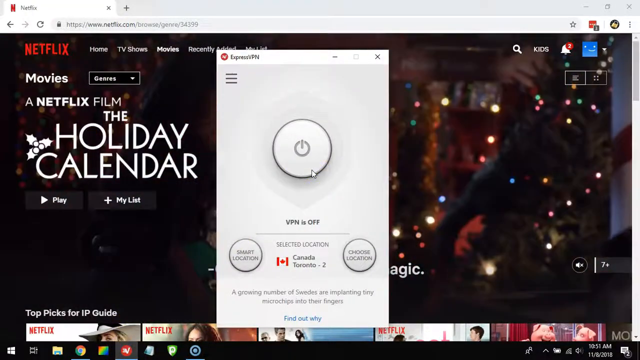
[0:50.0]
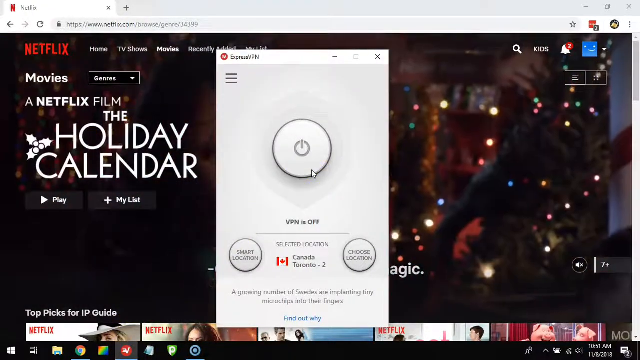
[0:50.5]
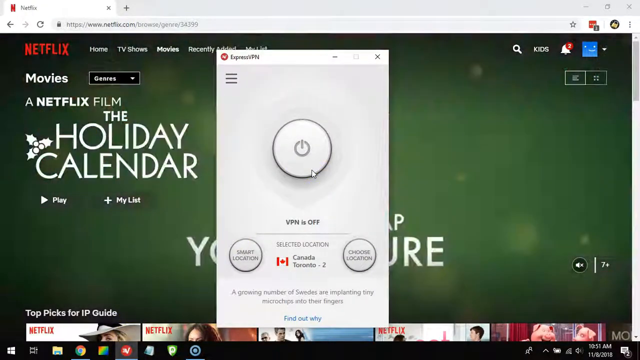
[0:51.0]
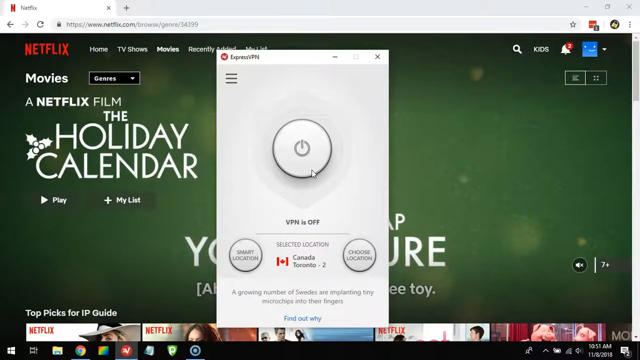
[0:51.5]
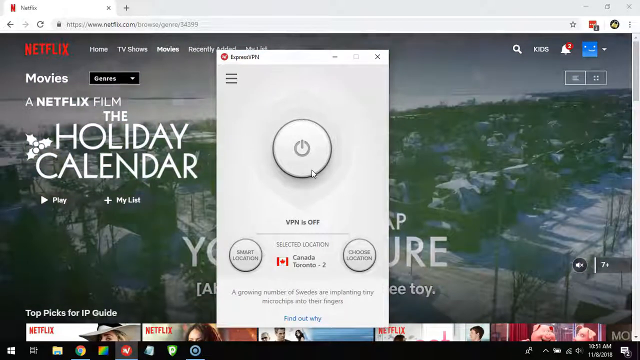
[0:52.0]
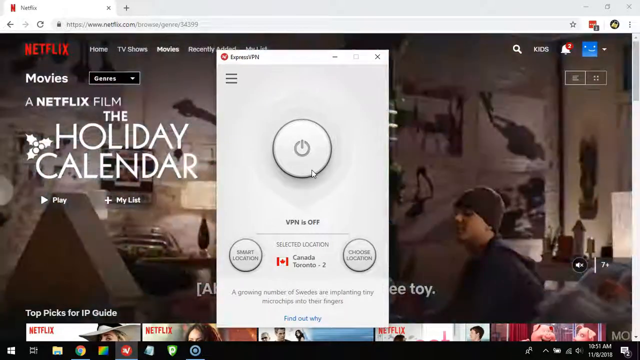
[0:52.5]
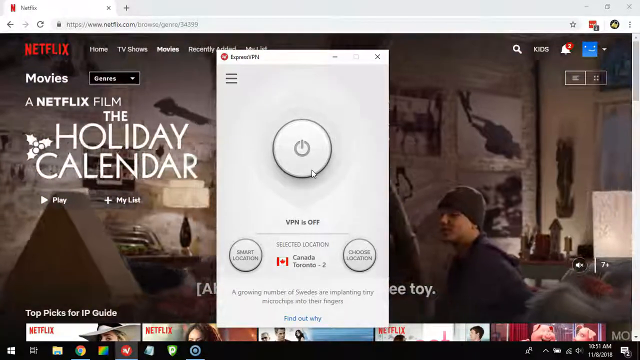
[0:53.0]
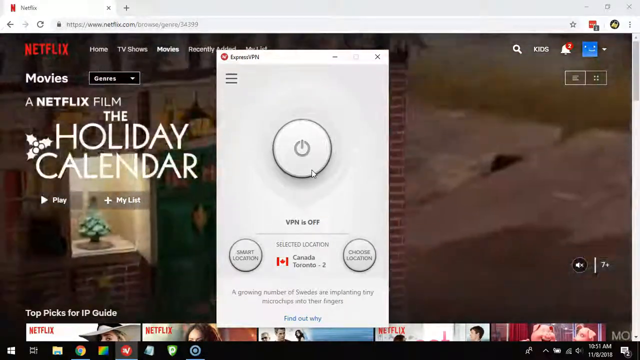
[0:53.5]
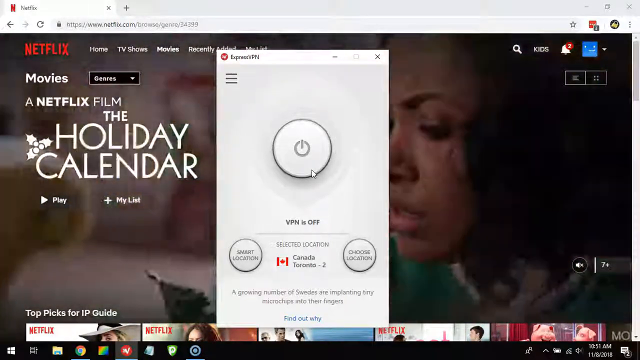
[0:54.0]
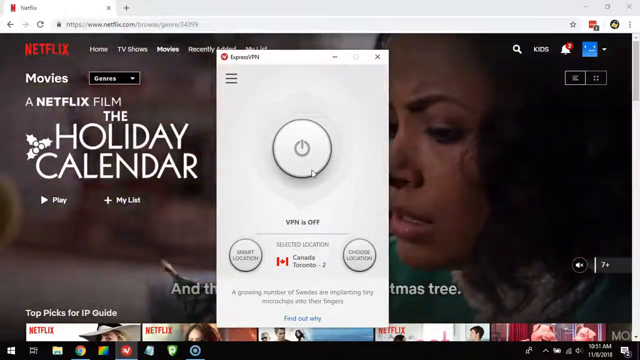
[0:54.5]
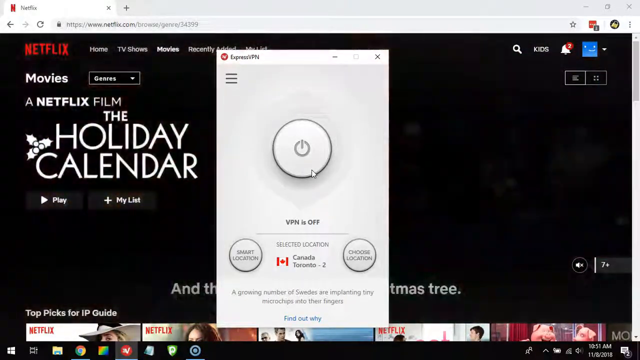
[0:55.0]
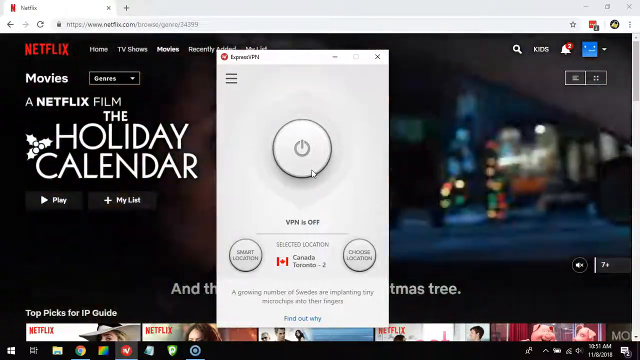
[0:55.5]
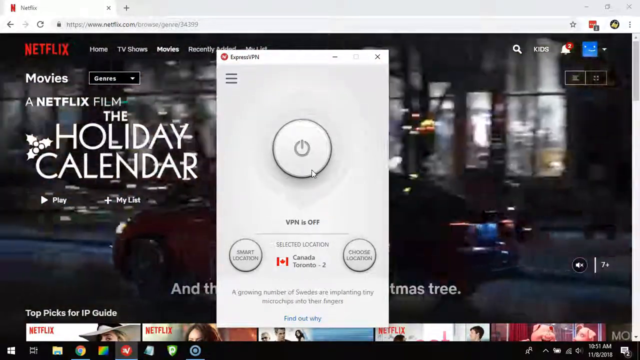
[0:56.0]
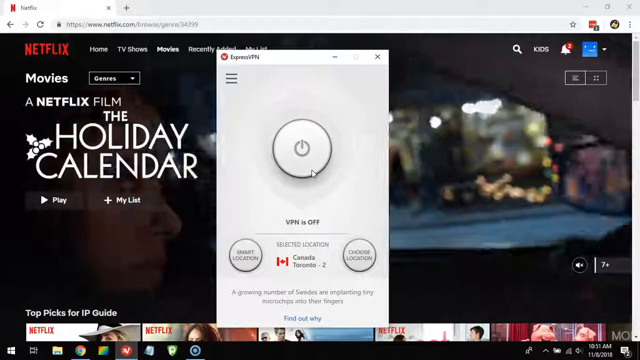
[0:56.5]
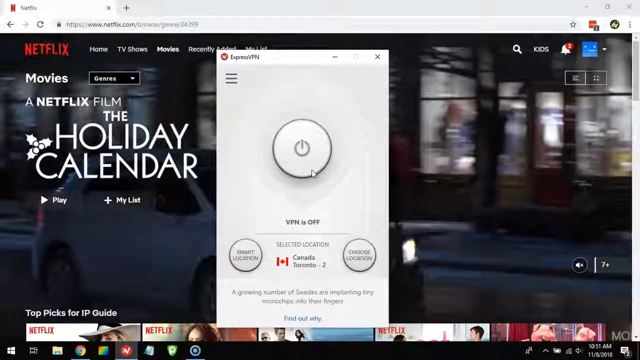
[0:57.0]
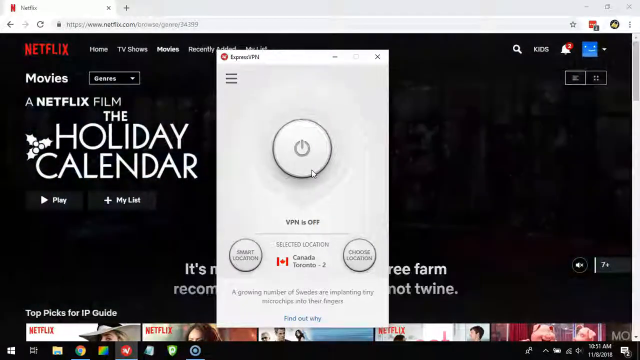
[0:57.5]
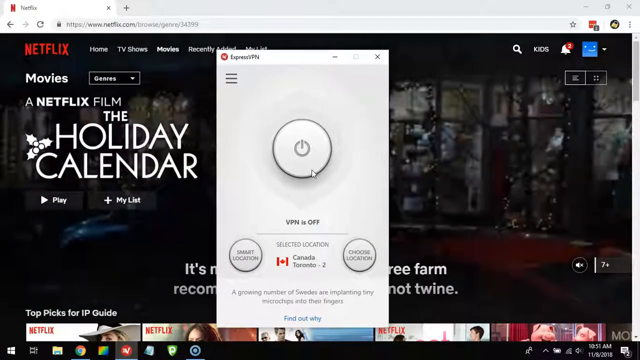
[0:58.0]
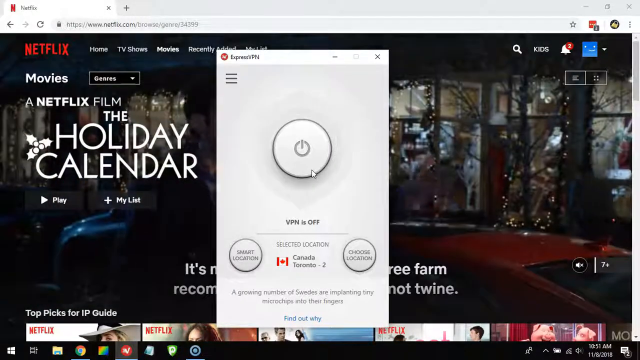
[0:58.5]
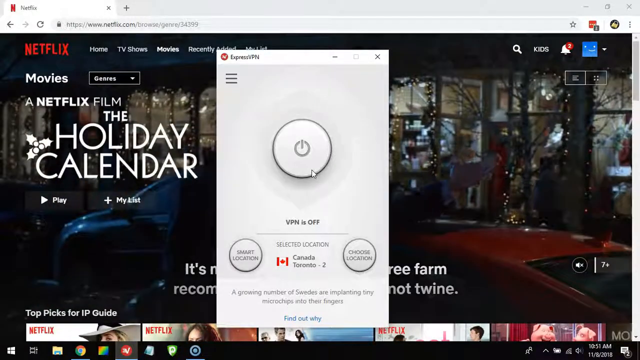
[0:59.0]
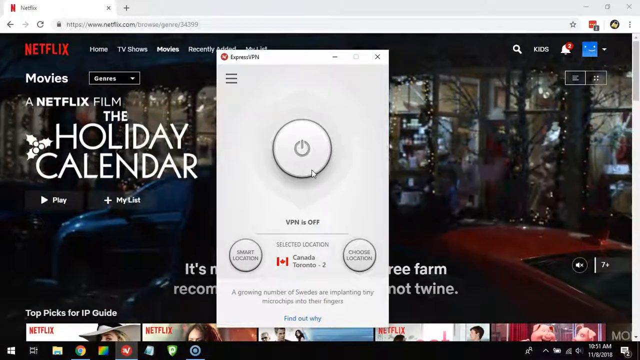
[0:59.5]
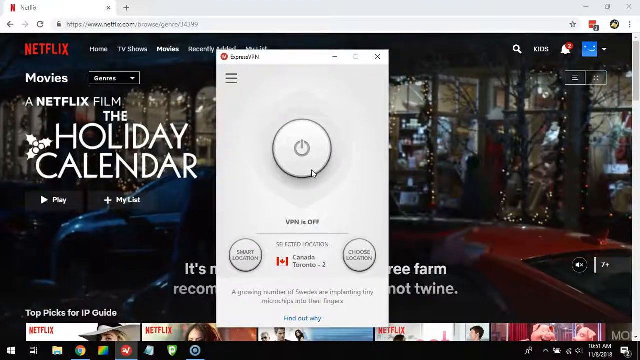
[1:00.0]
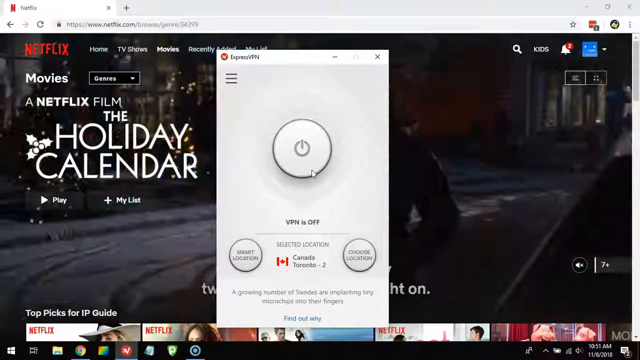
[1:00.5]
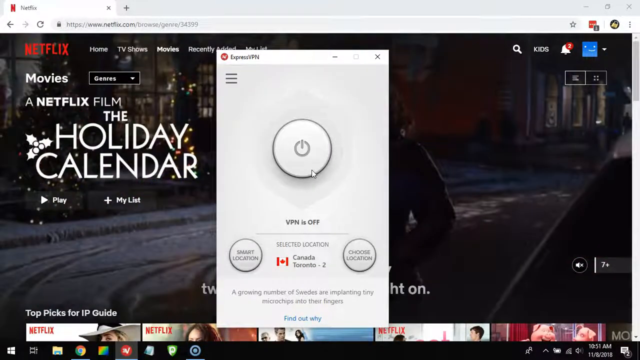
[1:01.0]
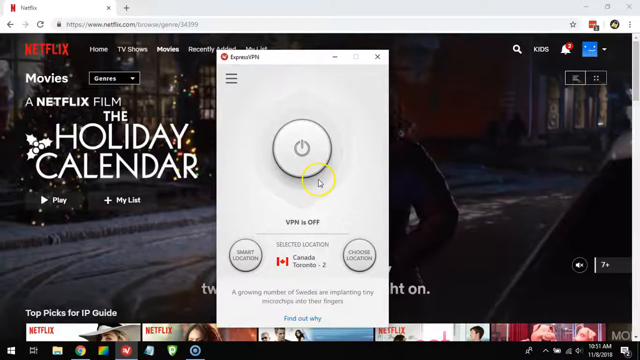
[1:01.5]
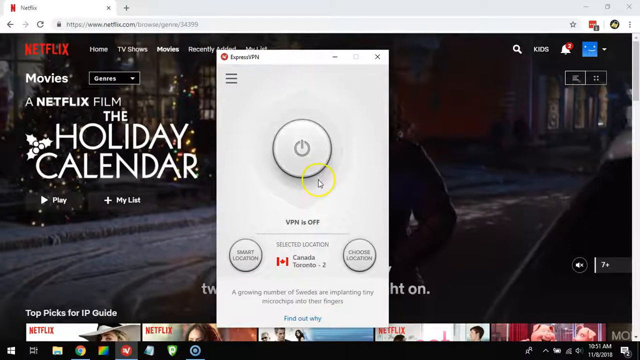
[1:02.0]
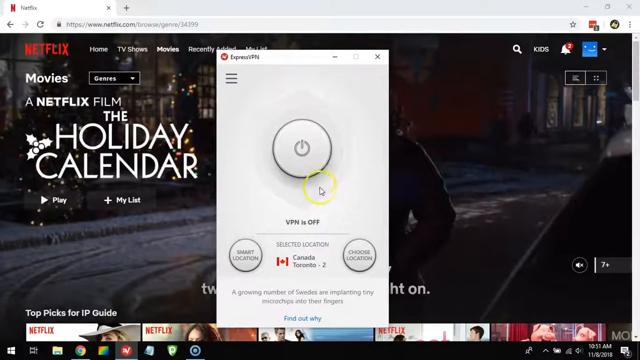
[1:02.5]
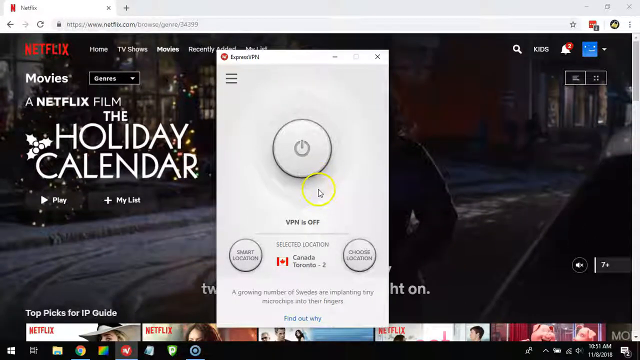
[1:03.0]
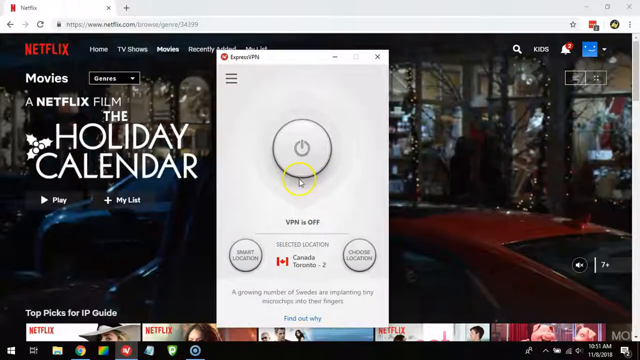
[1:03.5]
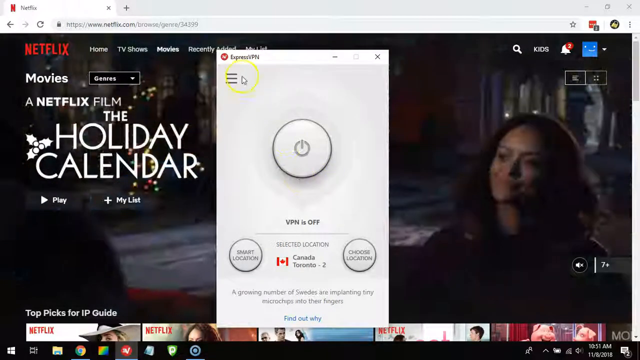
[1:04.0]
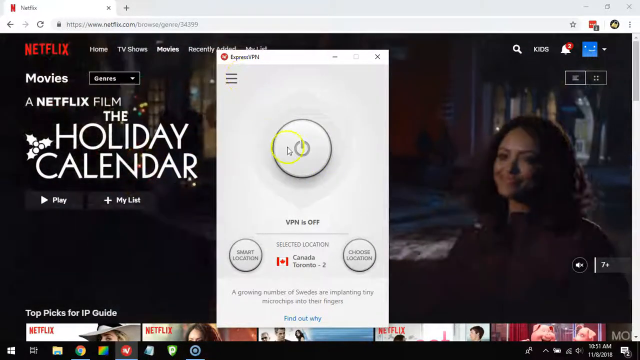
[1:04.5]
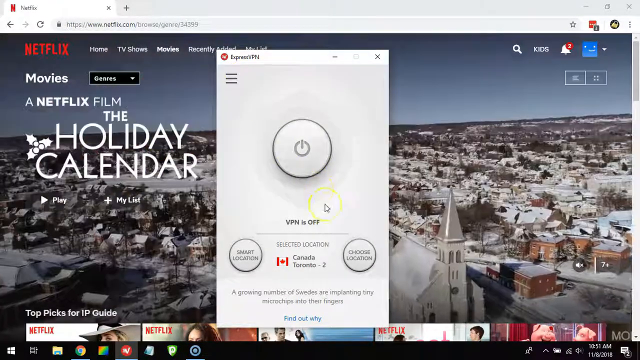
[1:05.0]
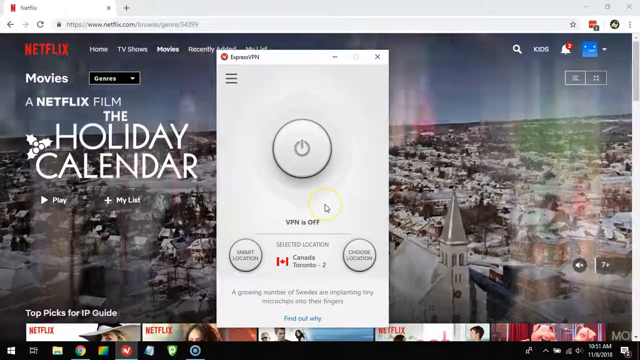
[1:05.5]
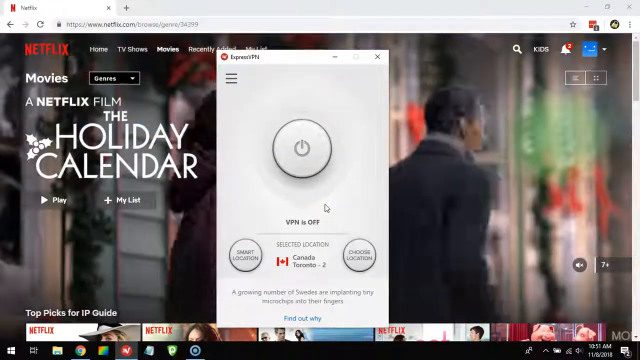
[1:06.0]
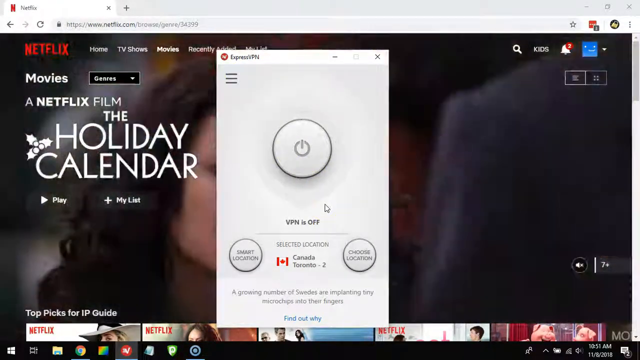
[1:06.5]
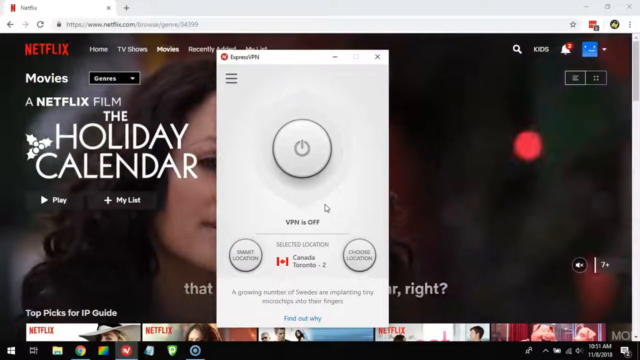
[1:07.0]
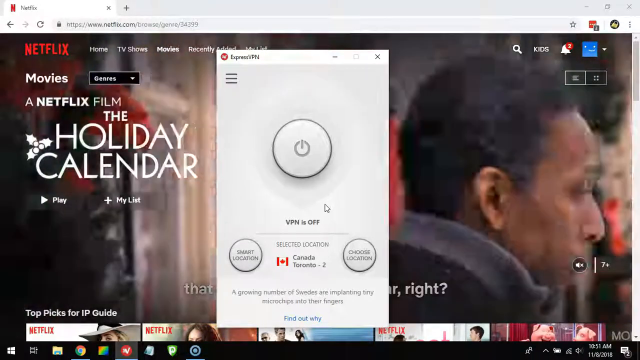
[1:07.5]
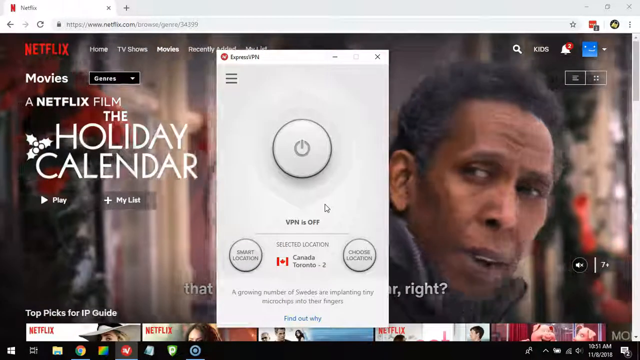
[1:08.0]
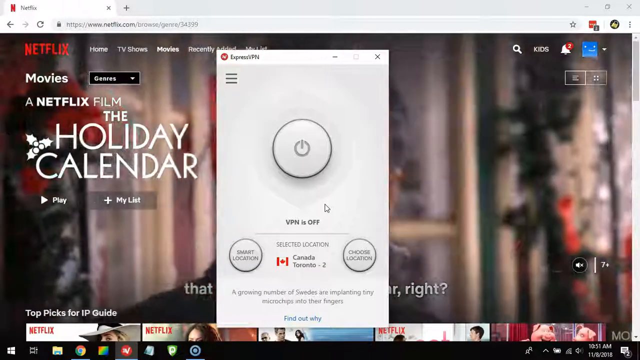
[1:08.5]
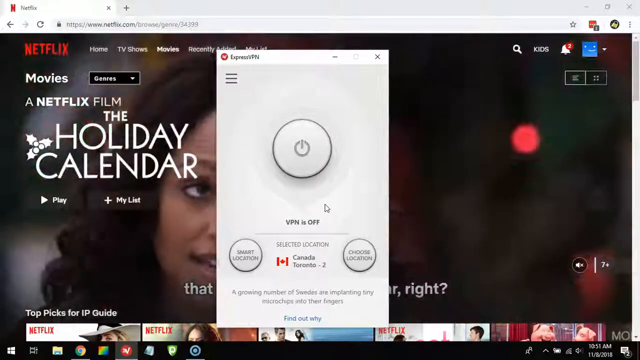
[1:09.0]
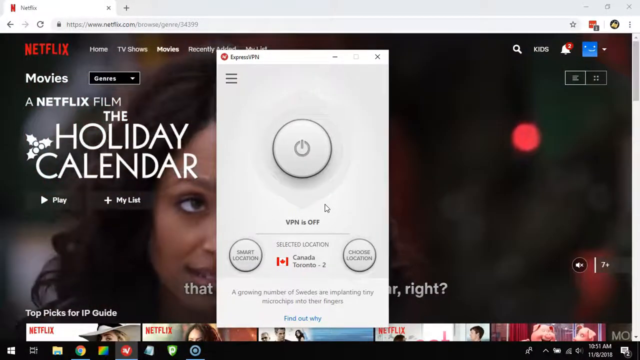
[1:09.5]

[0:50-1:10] The VPN box stays open while the trailer keeps playing, and nothing is chosen. The computer toolbar shows 10:51 a.m. and apparently November 8th, 2018. The VPN box reads "a growing number of Swedes are implanting tiny microchips into their fingers" and "find out why." The Express VPN app offers the options smart location and choose location, which is set to Toronto, Canada, though the VPN has not been turned on.